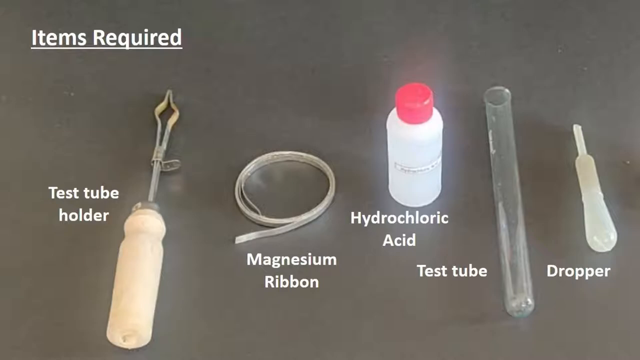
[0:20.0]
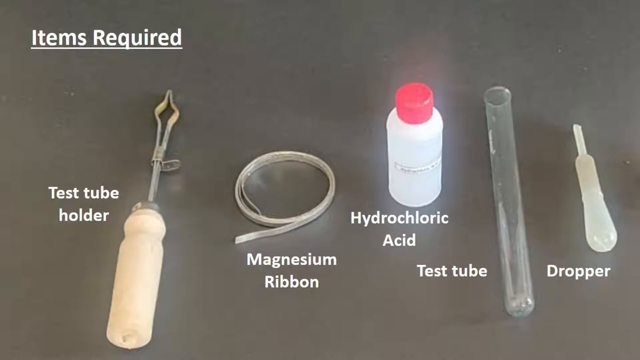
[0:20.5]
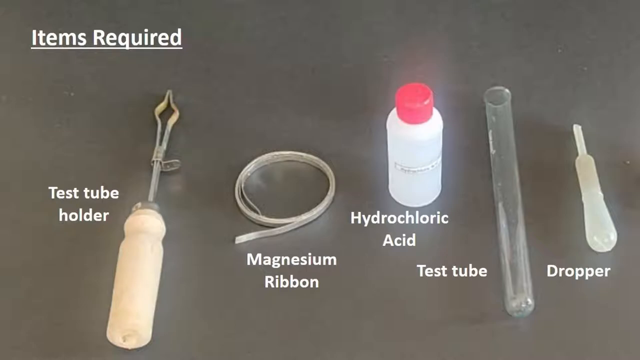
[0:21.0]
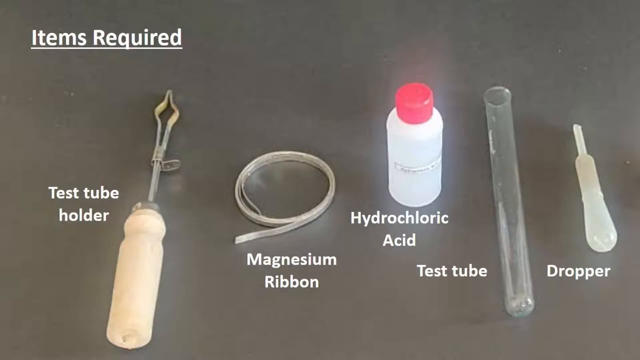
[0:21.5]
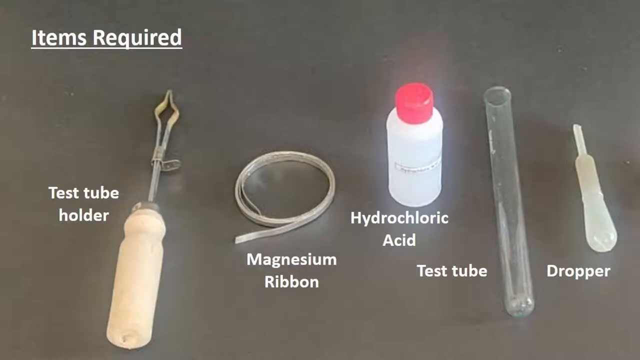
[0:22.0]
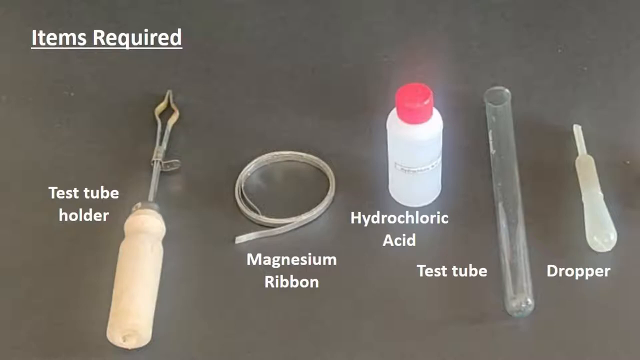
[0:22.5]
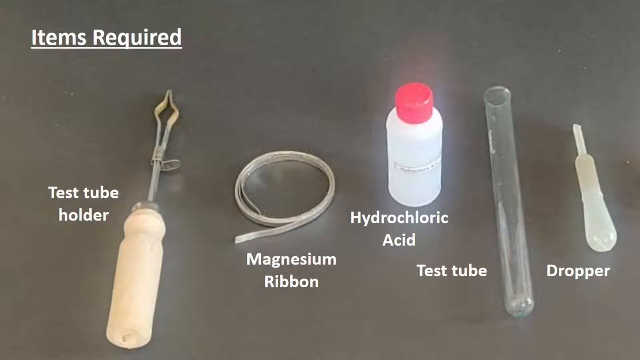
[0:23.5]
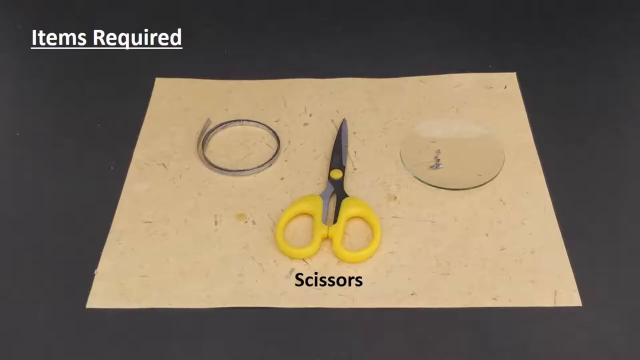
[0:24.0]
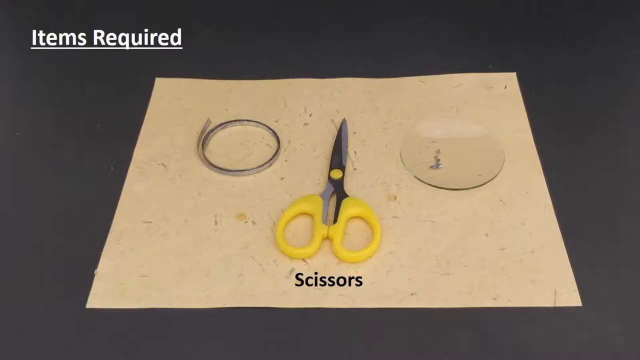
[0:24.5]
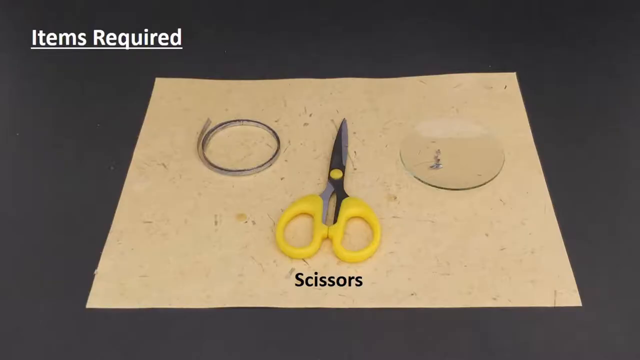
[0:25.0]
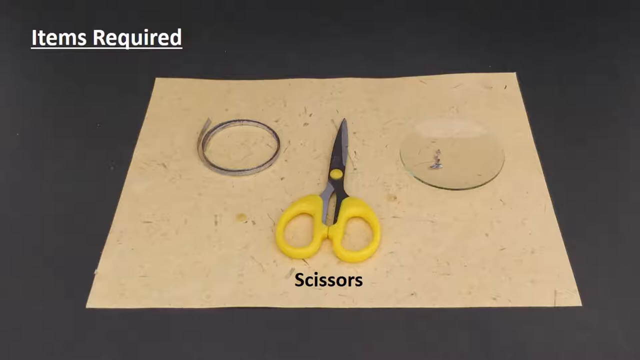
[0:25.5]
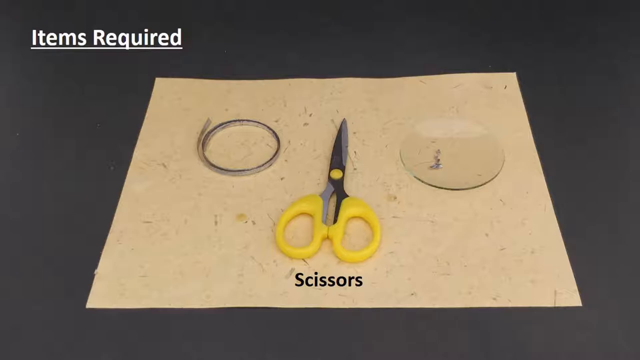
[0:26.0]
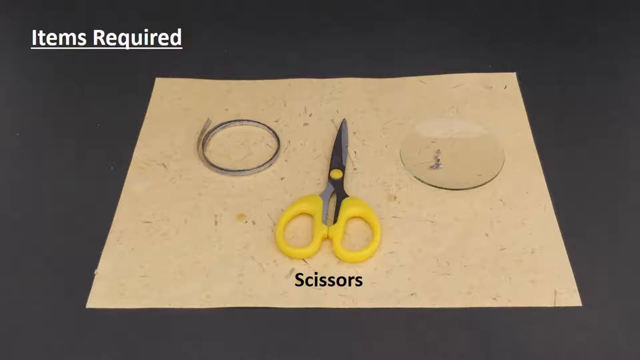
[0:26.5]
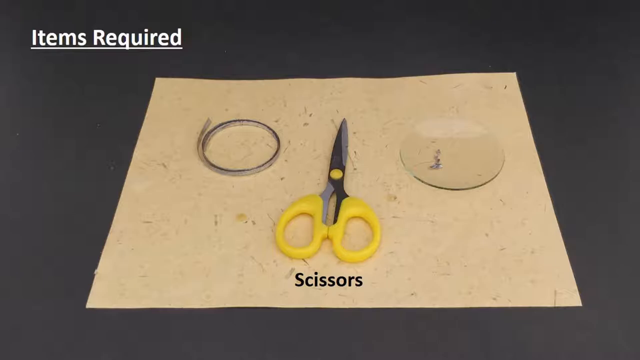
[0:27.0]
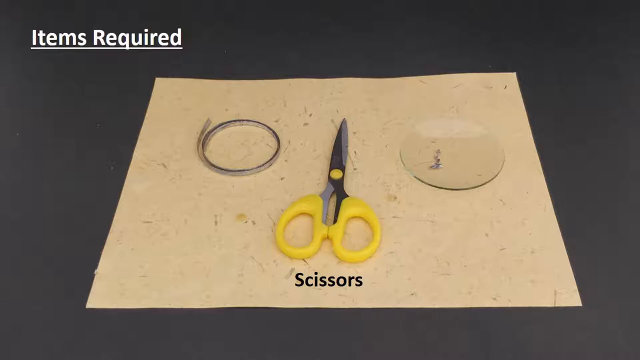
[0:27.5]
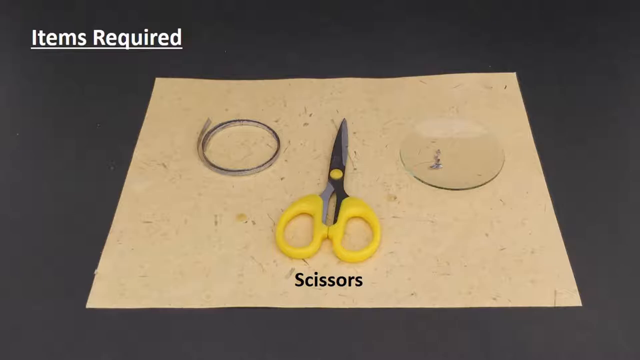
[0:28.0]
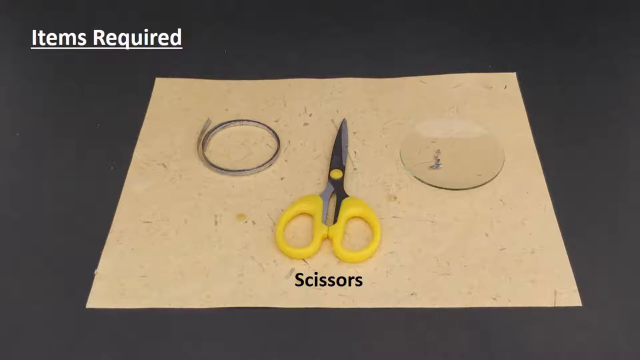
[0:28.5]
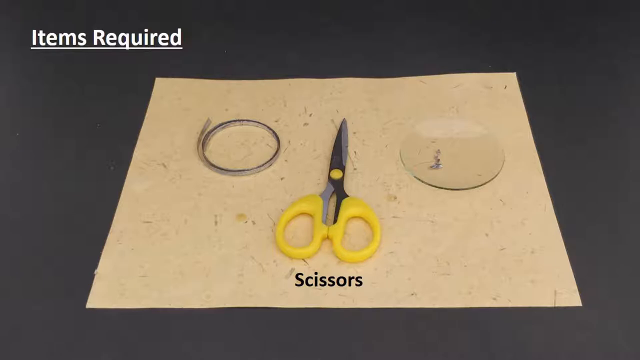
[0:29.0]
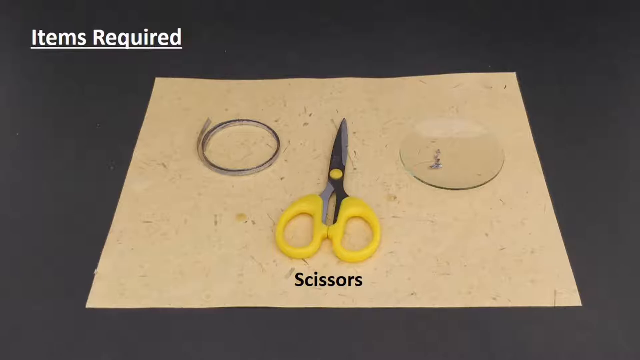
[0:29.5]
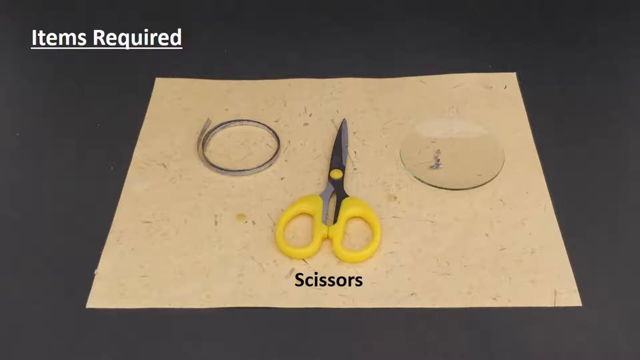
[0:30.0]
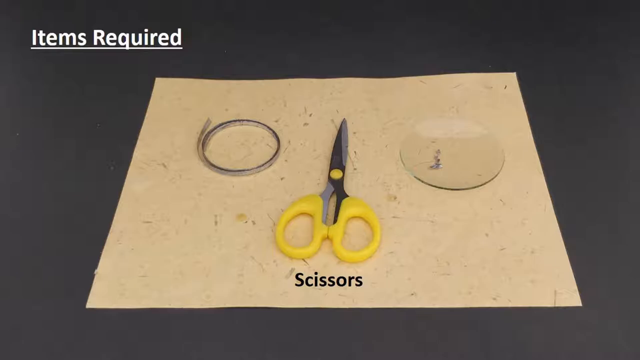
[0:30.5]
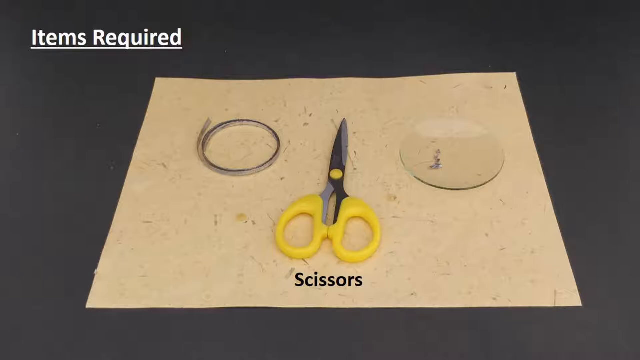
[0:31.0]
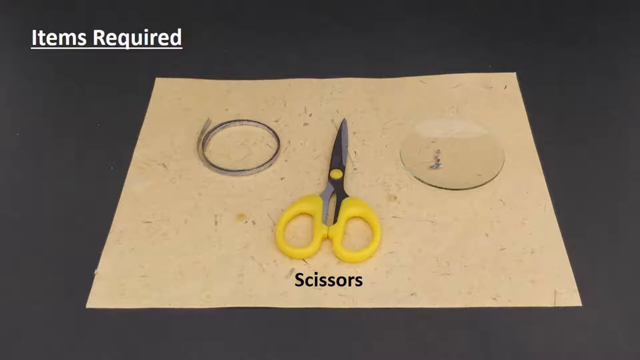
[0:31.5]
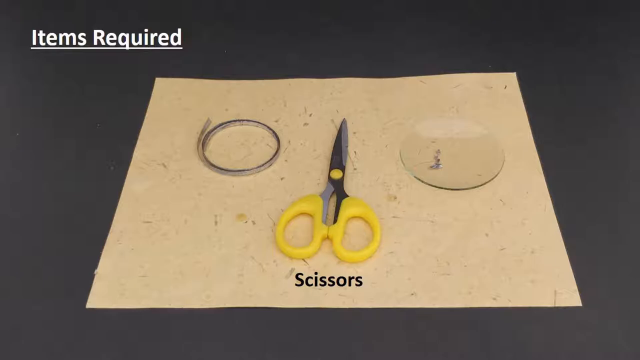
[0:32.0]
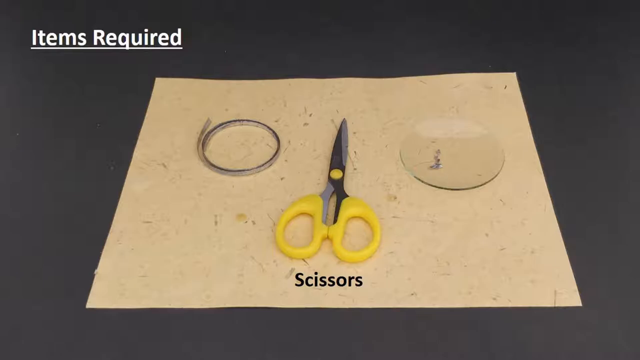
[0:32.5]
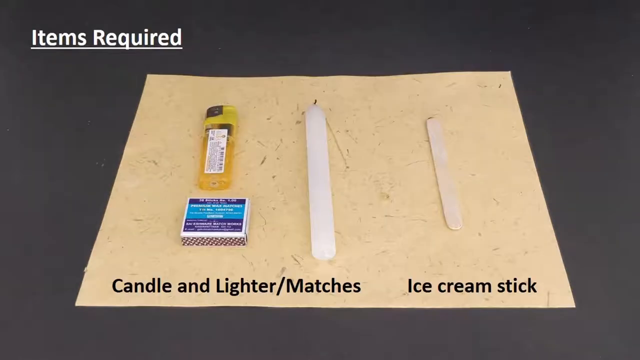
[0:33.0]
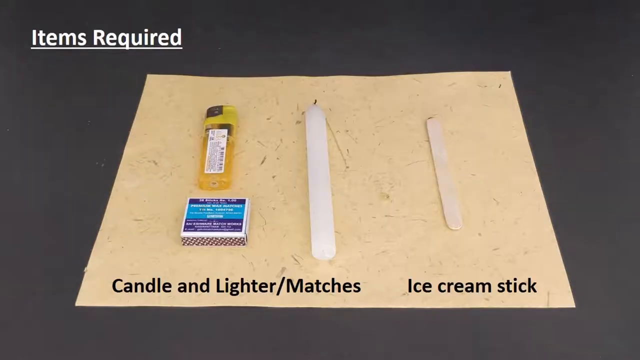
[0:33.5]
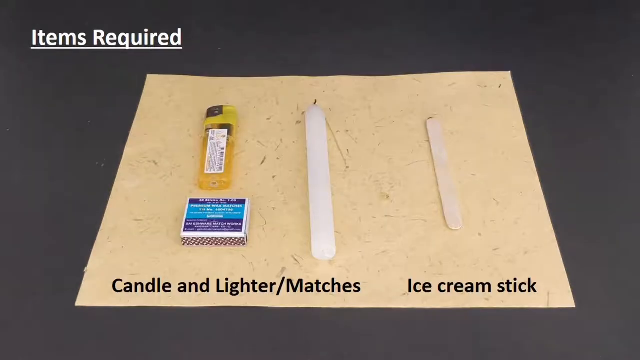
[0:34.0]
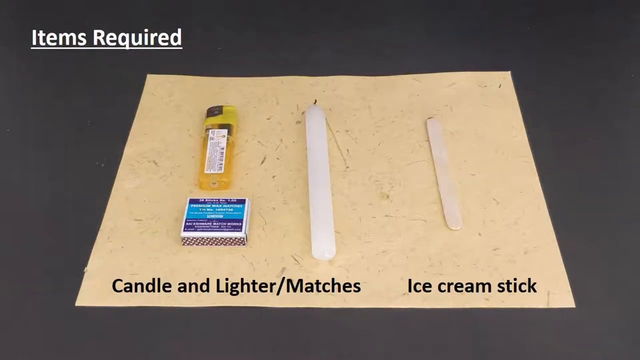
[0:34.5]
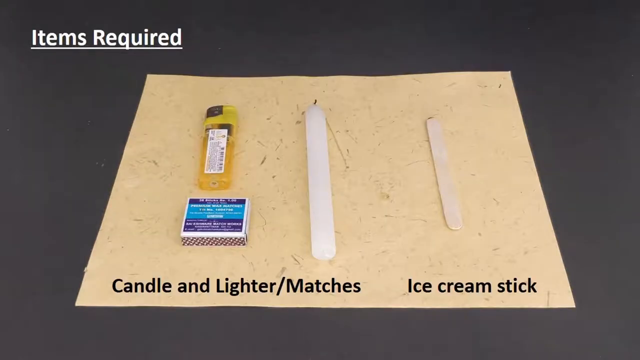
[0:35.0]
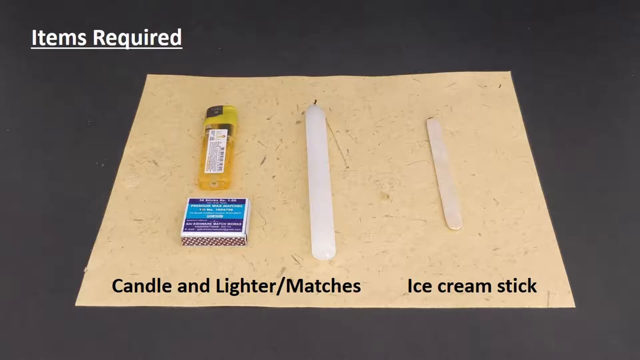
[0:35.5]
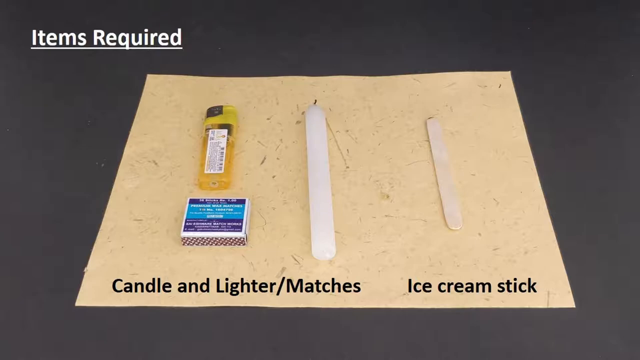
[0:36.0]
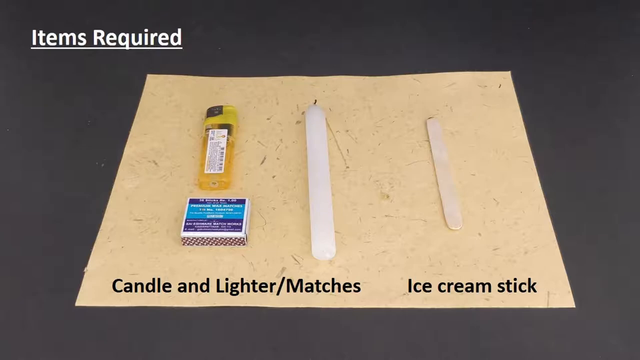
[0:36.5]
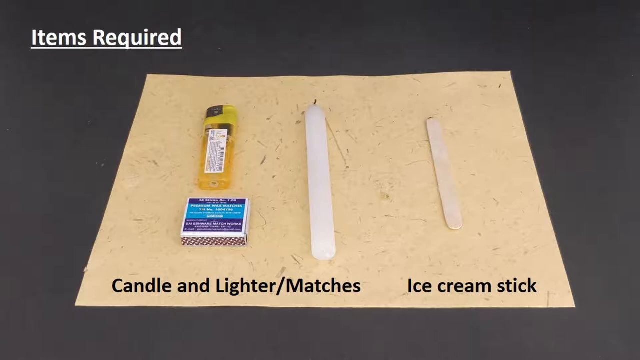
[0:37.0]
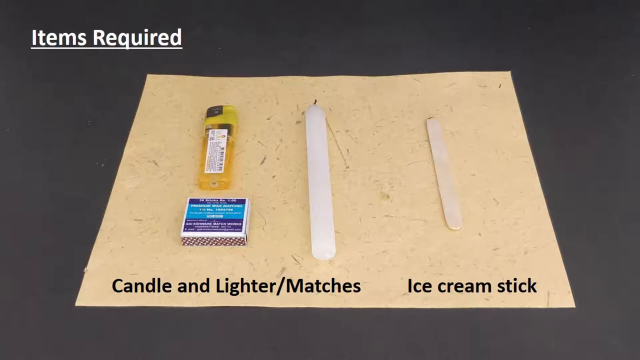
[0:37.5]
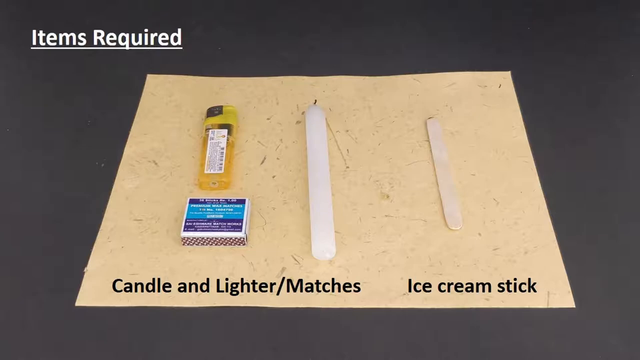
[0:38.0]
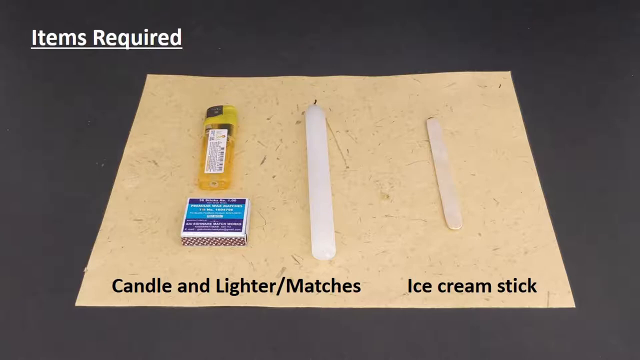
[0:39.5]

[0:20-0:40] A close-up shows a tabletop with items lying on it in the middle of the screen. In the top left corner are the underlined words "items required." The items appear to be on a tan mat. There appears to be a roll of wire on the left and an oval, concave piece of glass on the right. In the middle is a pair of scissors with a yellow handle, with the word "scissors" underneath. The video transitions to the same tabletop, the same text in the top left corner and the same tan mat, but with different items: a candle and lighter, matches, and an ice cream stick, lying on the mat with black text beneath them identifying them. This tabletop is a bit darker than the previous one; although it still looks gray-silver, it is not shining like the previous tabletop.